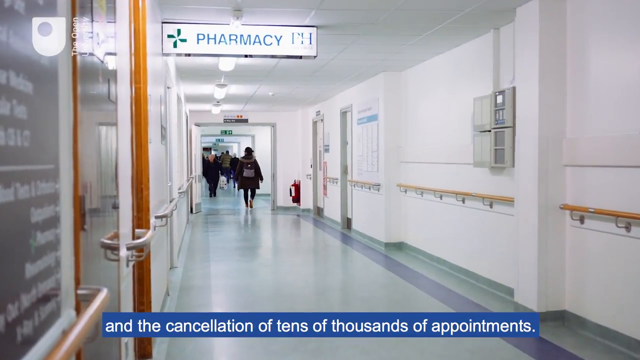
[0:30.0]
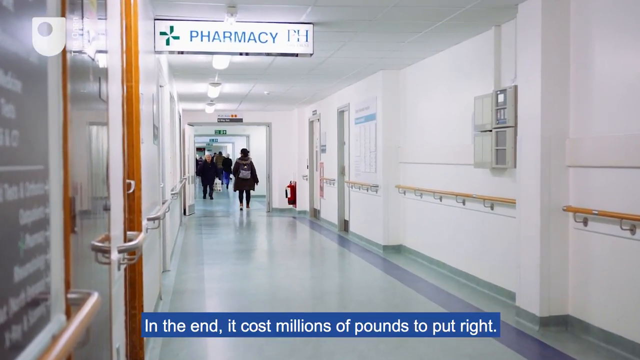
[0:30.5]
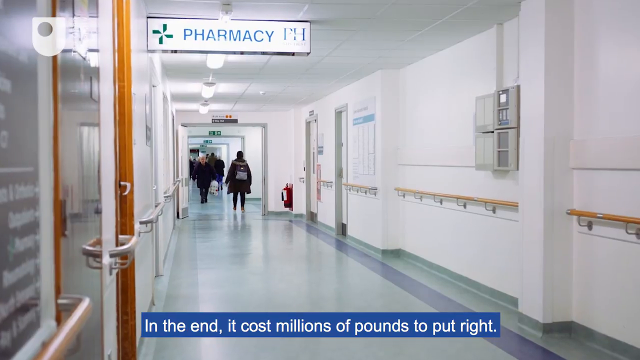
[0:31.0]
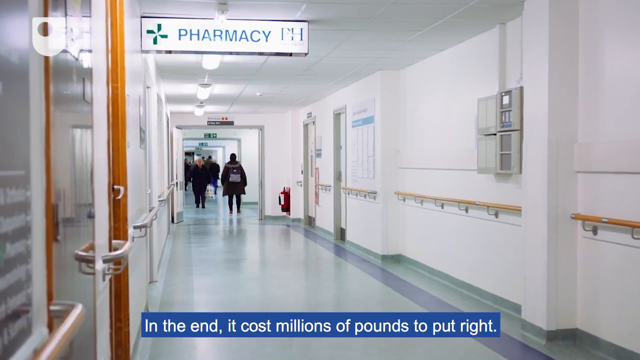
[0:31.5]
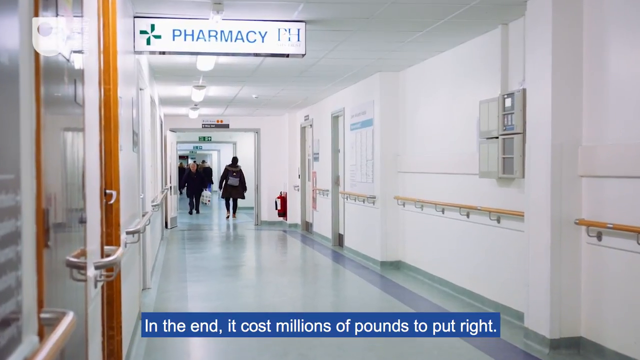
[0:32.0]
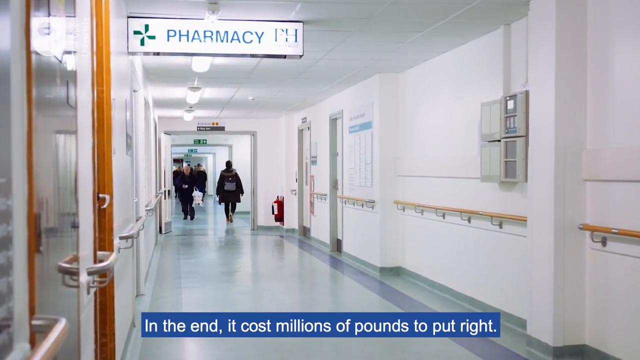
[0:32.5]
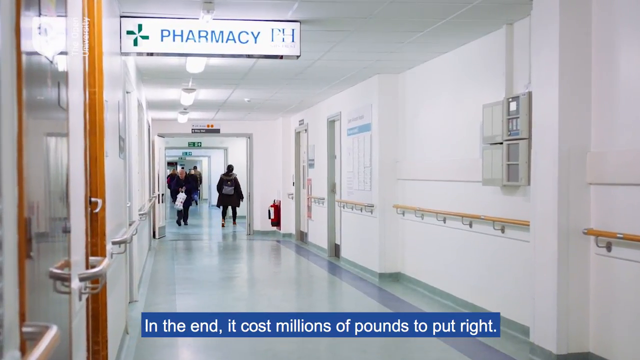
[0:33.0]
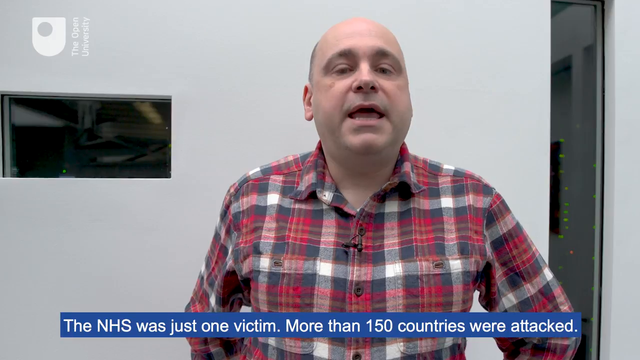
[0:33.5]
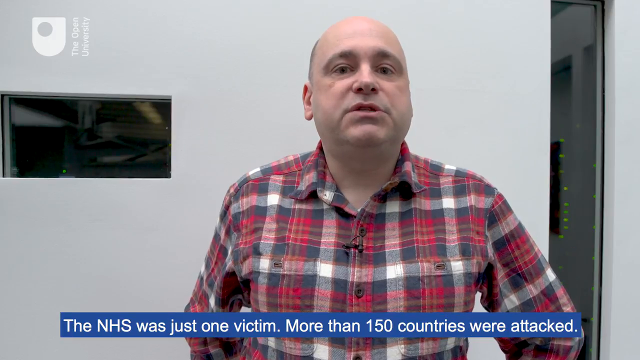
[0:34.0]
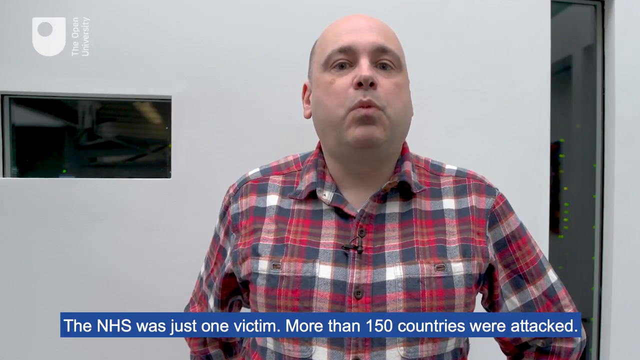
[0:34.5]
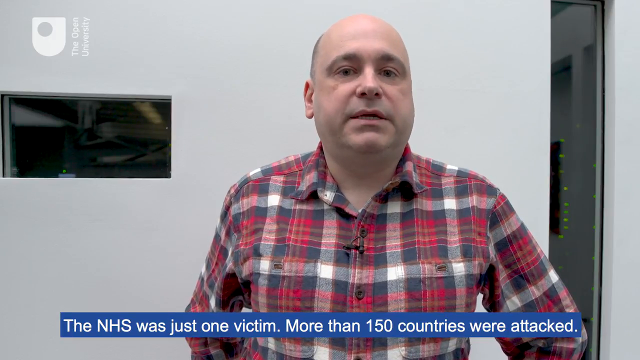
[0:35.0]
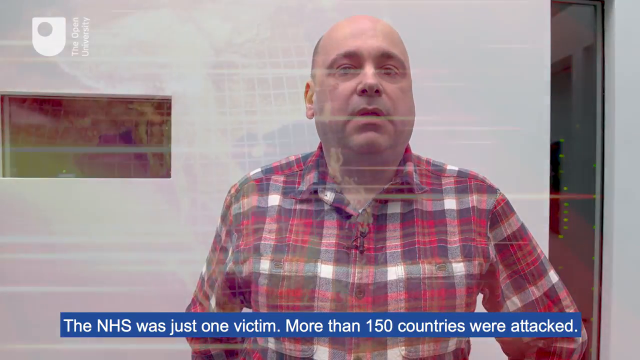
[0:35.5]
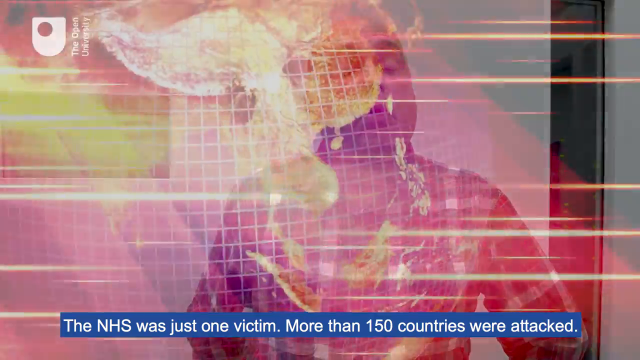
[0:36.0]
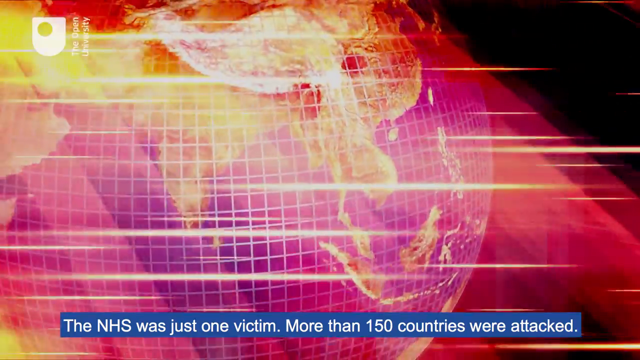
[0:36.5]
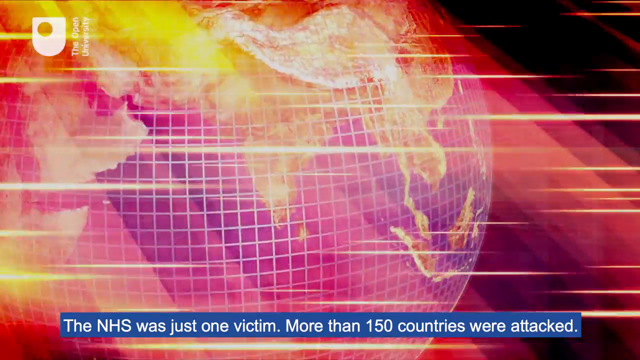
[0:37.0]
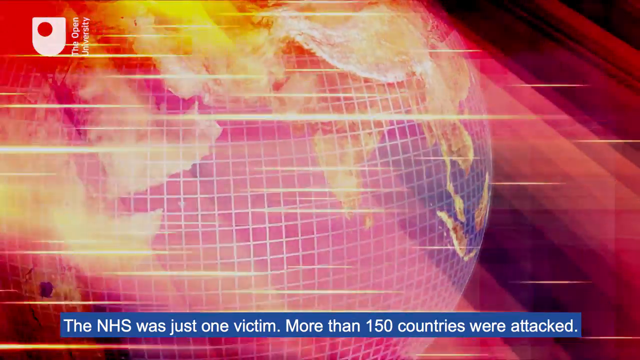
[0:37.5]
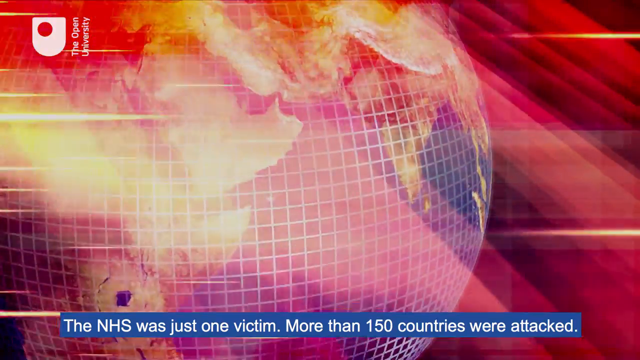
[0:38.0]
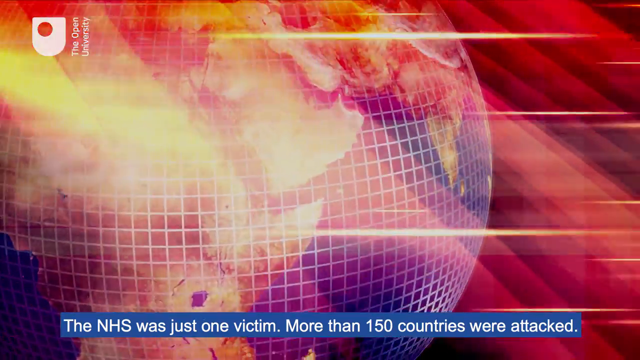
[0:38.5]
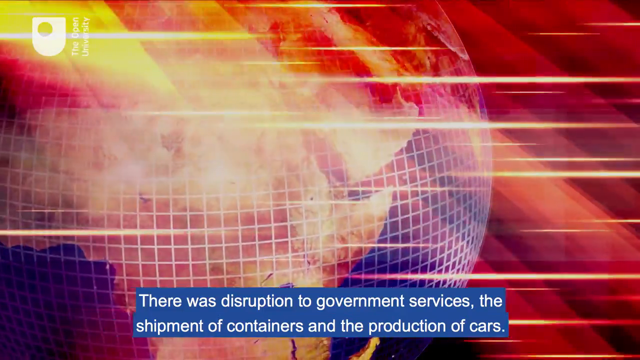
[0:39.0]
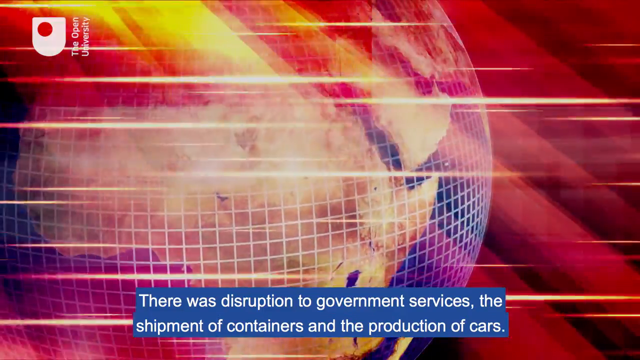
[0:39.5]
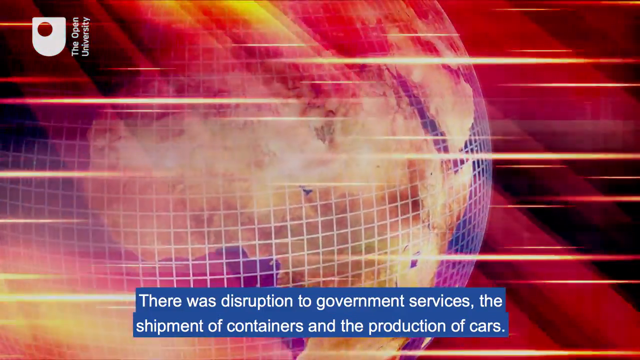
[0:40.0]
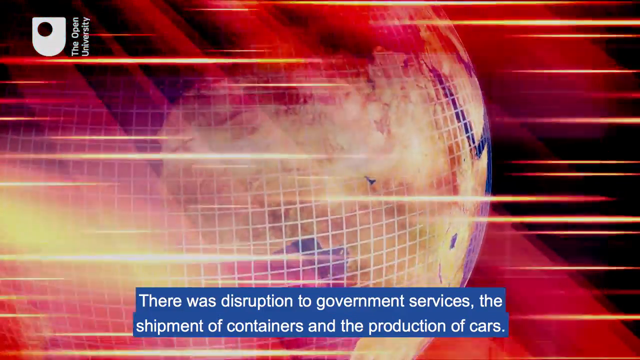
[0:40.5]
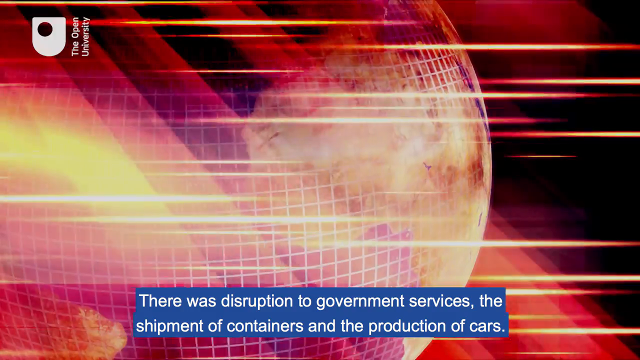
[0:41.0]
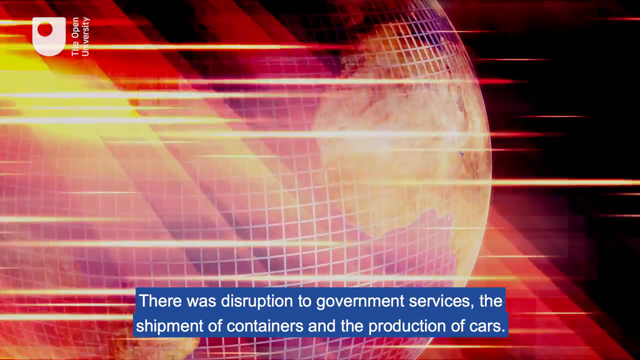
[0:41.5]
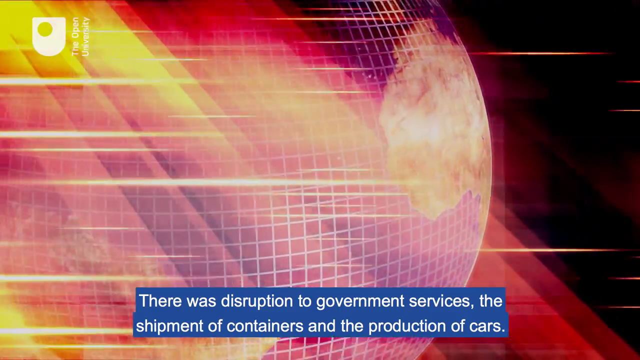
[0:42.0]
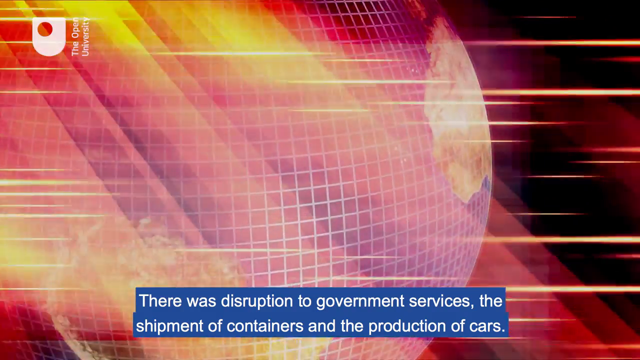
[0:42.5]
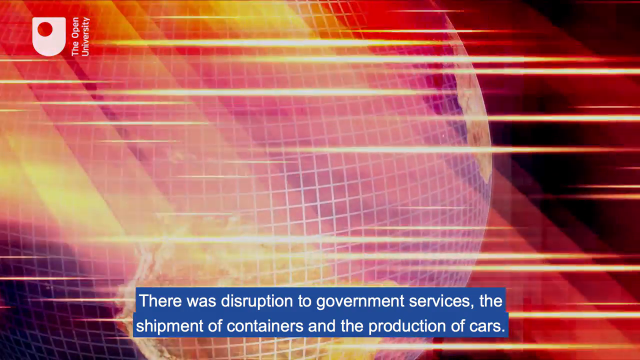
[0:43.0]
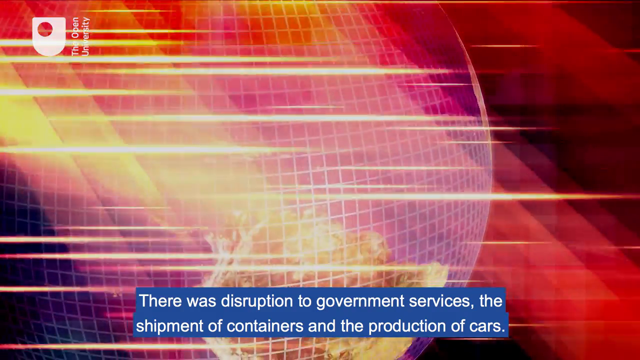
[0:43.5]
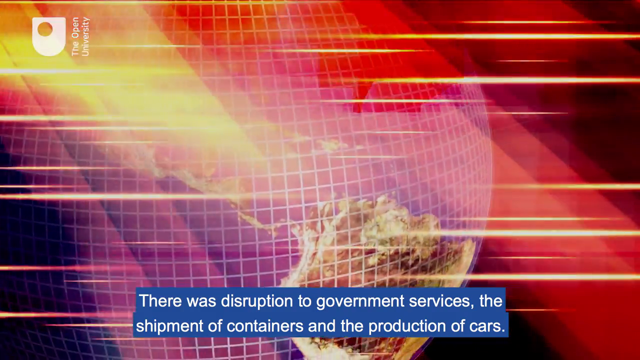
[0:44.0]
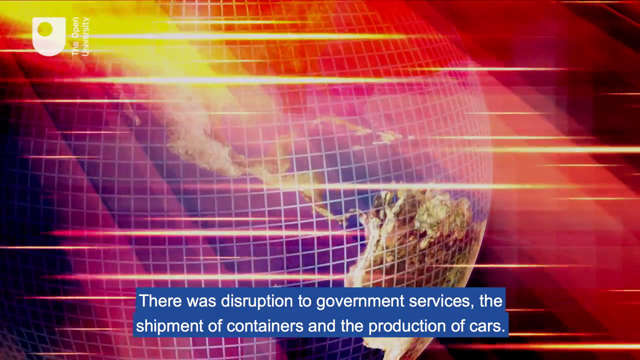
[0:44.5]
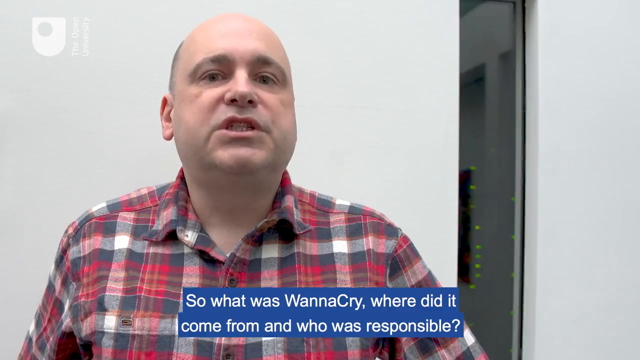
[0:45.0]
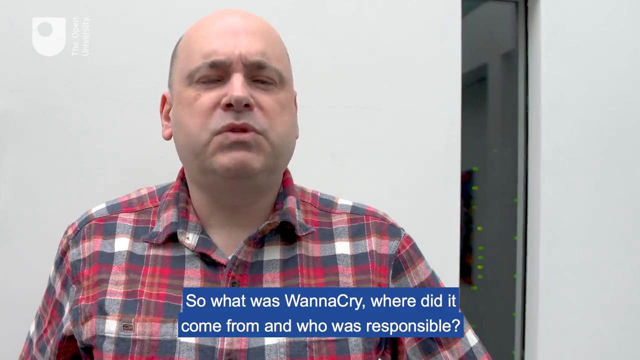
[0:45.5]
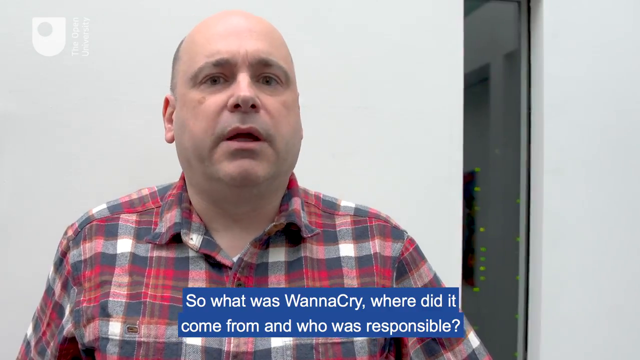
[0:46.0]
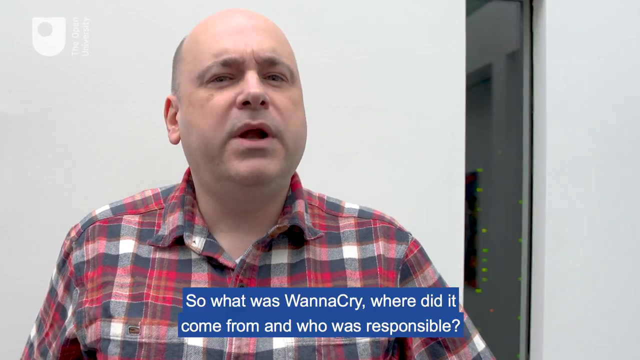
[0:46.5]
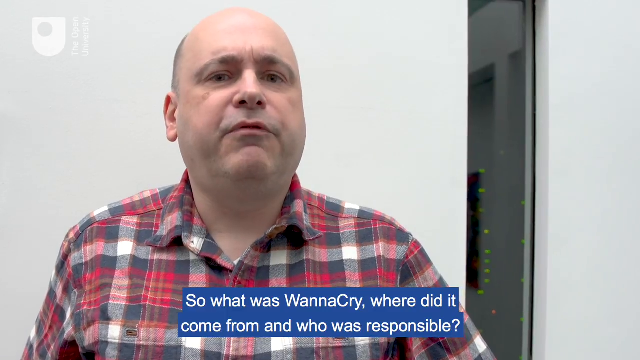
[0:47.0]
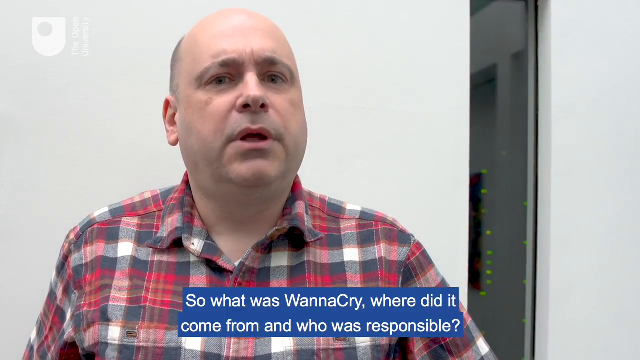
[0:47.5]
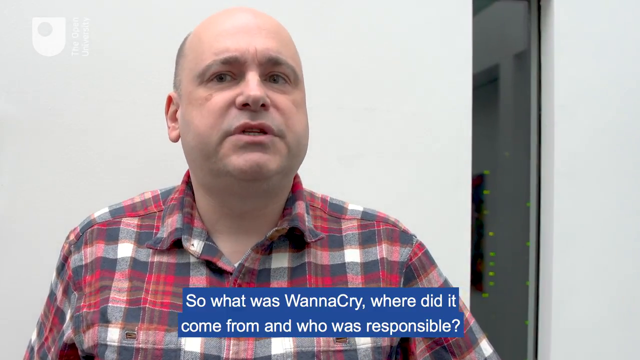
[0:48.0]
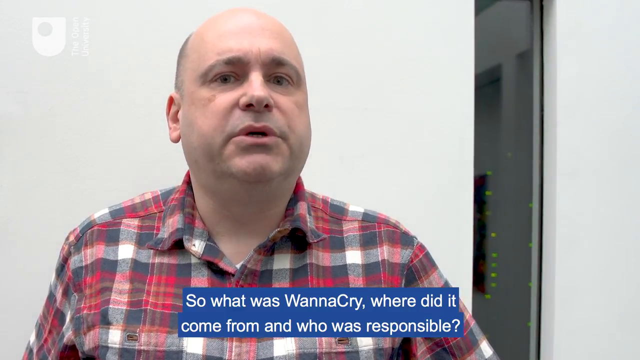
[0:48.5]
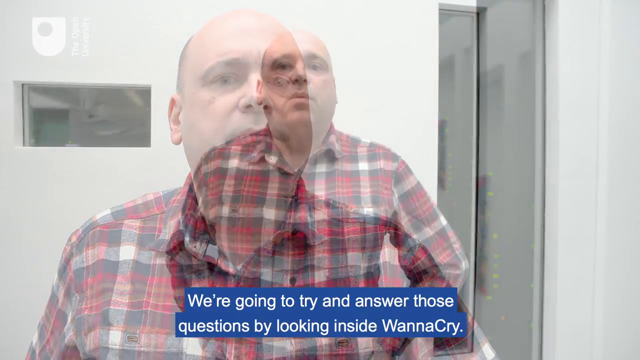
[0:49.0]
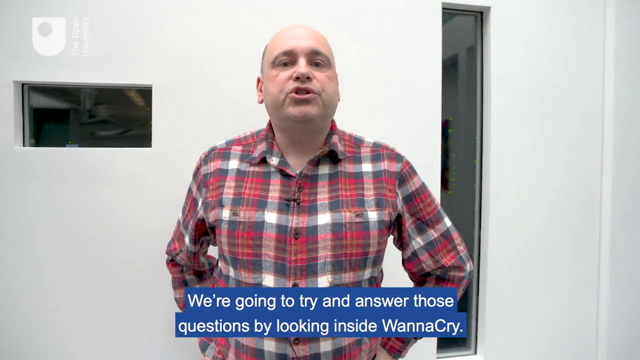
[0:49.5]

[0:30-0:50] Footage of a hospital hallway continues, with a sign at the top of the screen reading "Pharmacy PH." Individuals walk down the hallway before a new subtitle on a blue background with white text reads "In the end, it cost millions of pounds to put right." The computer specialist and lecturer Mike Richards continues talking to the camera. The video then cuts to a globe rotating on the screen, overlaid with a red particle effect. A subtitle reads "Once more, there was disruption to government services, the shipment of containers, and the production of cars." Lastly, a subtitle reads "So what was WannaCry, where did it come from, and who was responsible?"